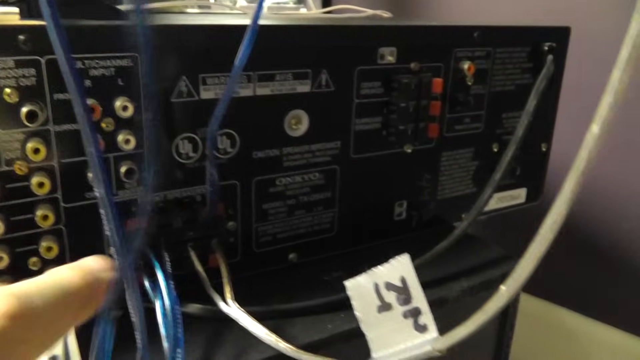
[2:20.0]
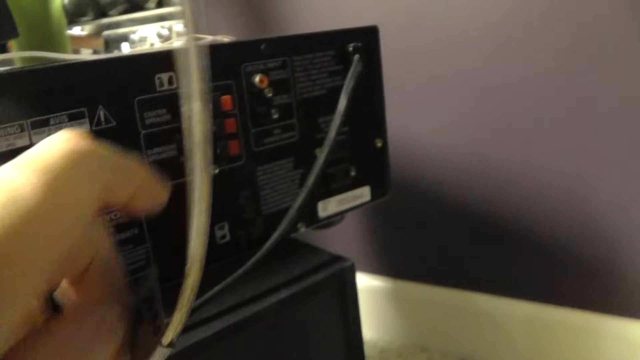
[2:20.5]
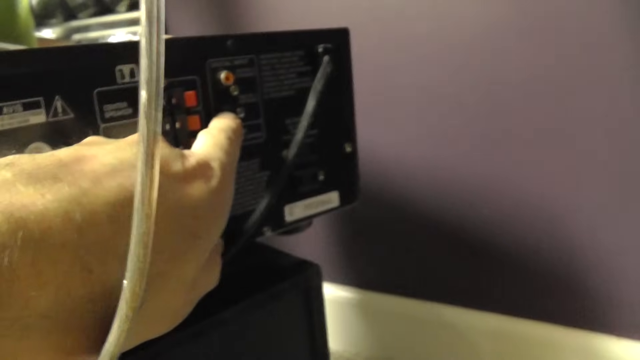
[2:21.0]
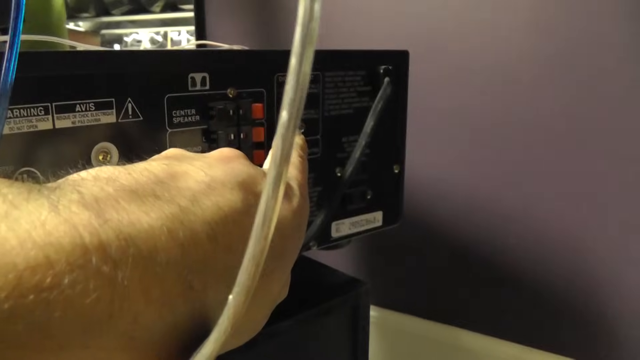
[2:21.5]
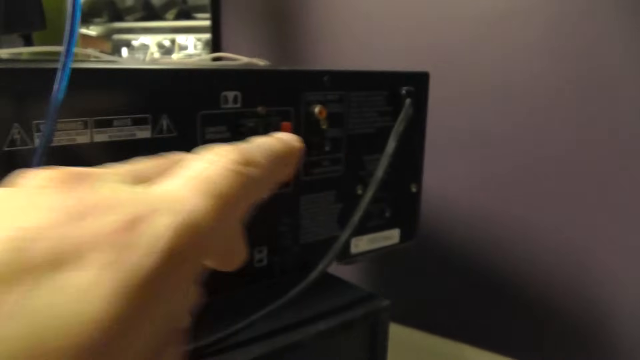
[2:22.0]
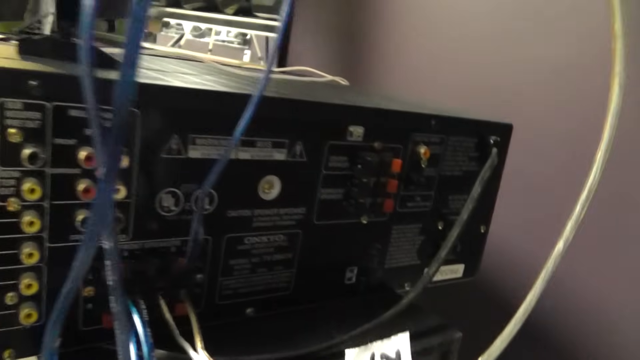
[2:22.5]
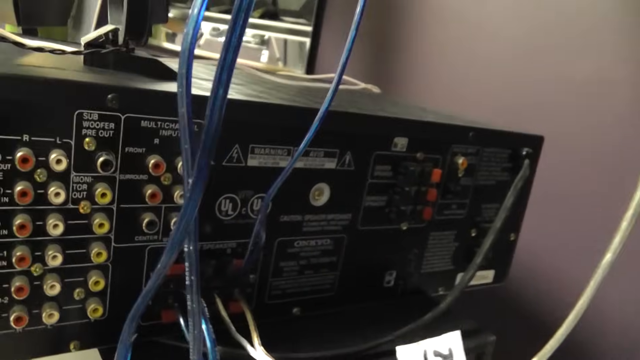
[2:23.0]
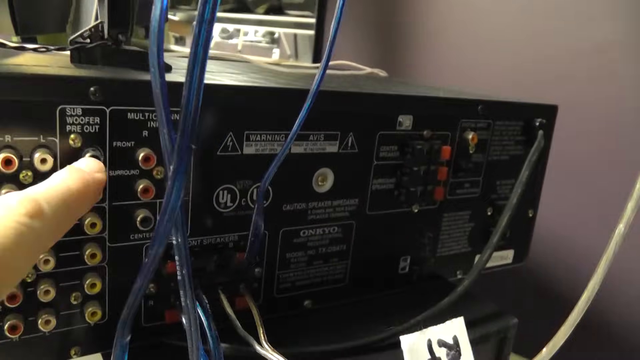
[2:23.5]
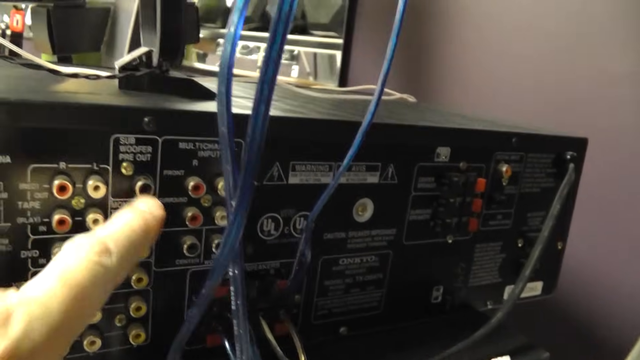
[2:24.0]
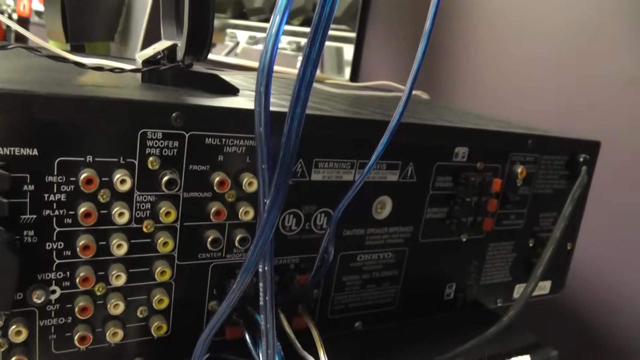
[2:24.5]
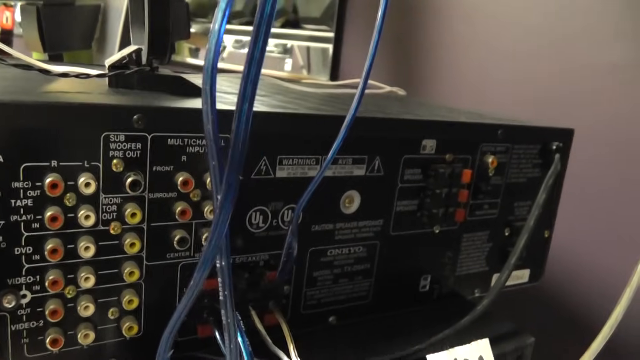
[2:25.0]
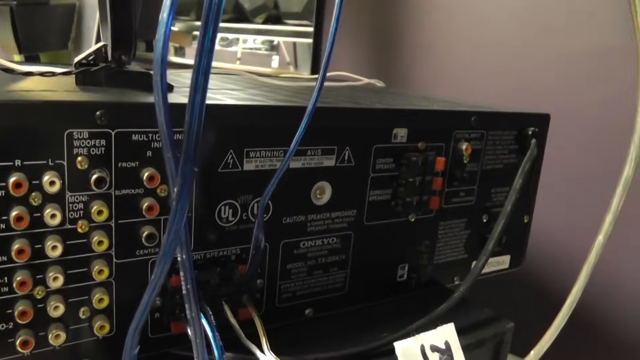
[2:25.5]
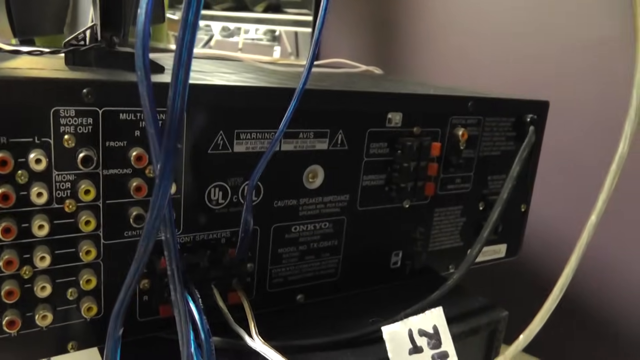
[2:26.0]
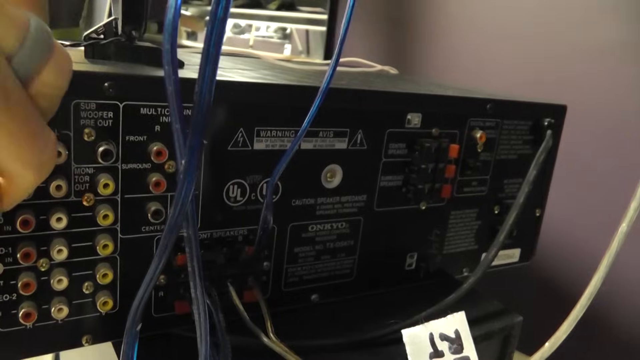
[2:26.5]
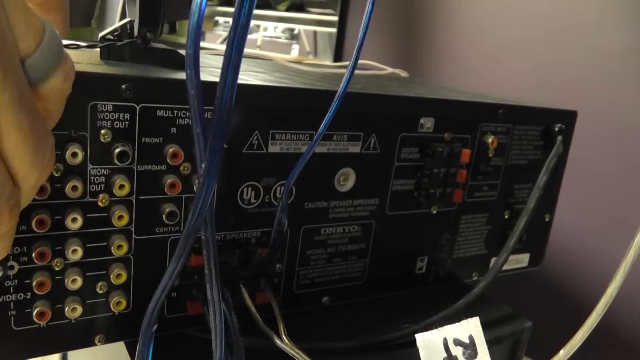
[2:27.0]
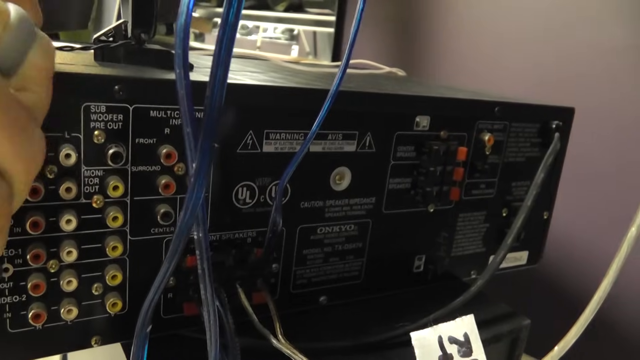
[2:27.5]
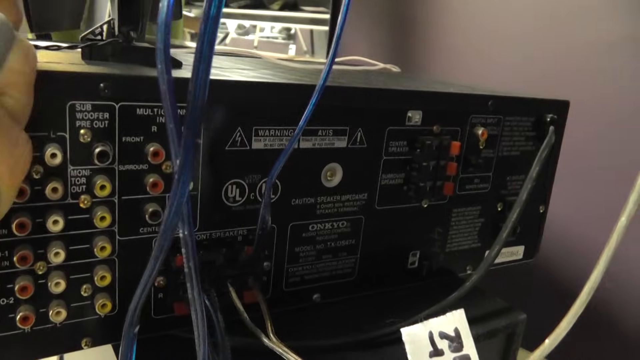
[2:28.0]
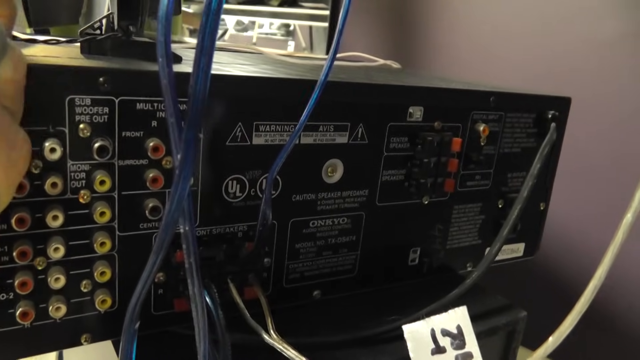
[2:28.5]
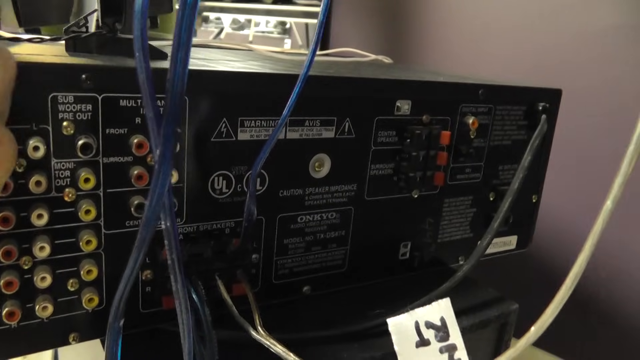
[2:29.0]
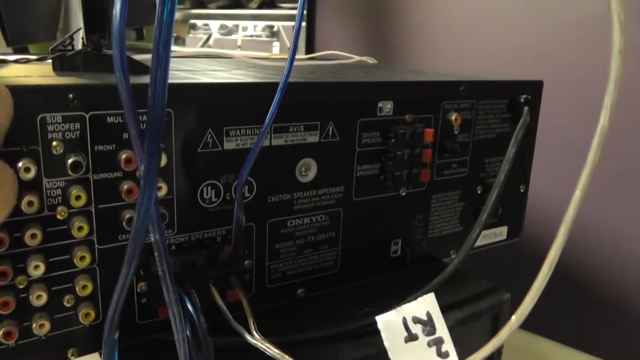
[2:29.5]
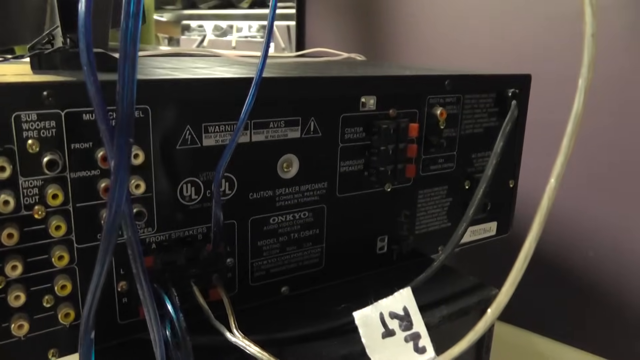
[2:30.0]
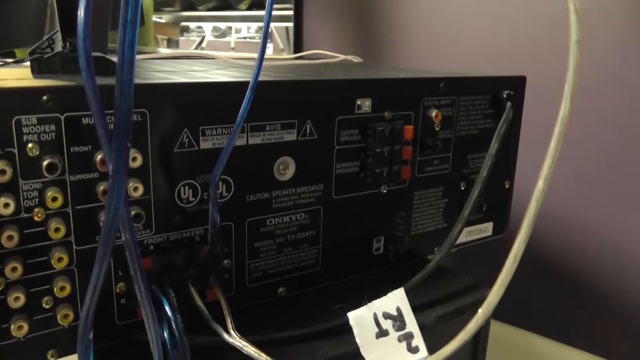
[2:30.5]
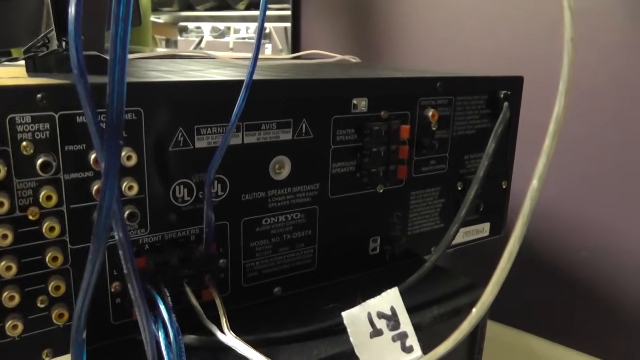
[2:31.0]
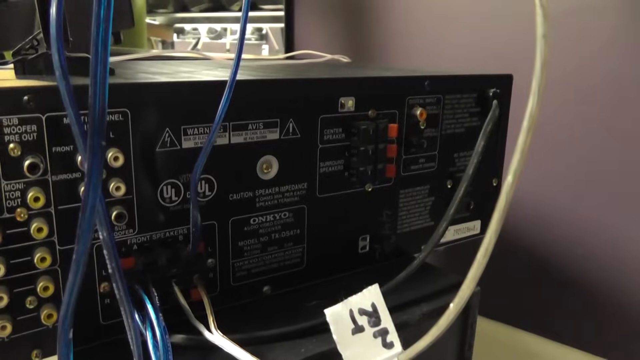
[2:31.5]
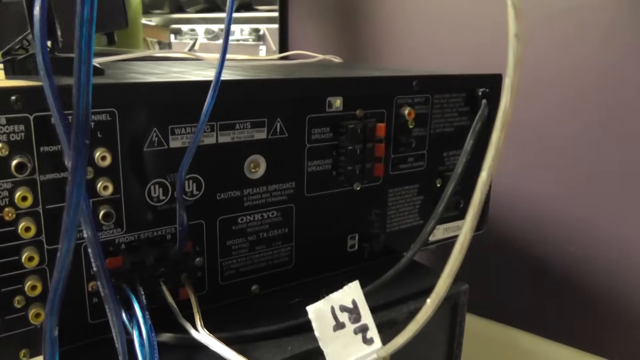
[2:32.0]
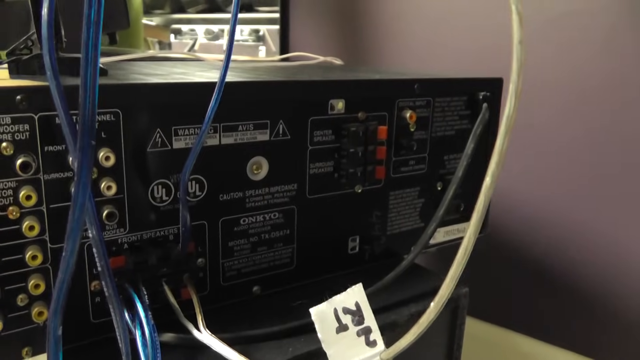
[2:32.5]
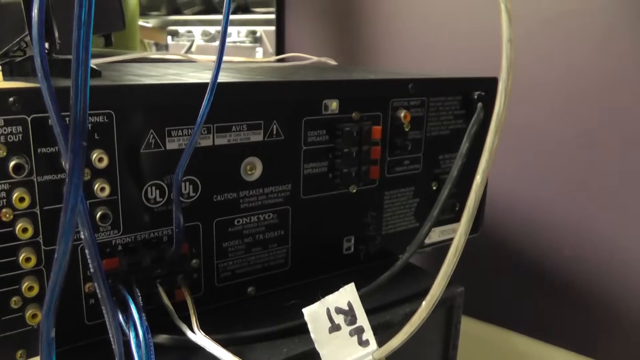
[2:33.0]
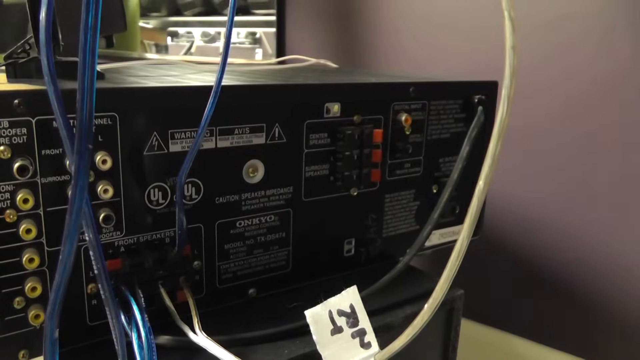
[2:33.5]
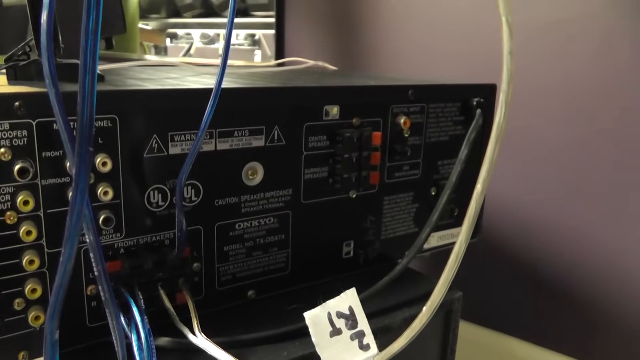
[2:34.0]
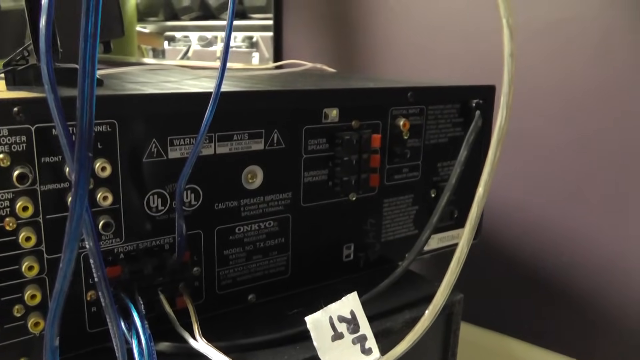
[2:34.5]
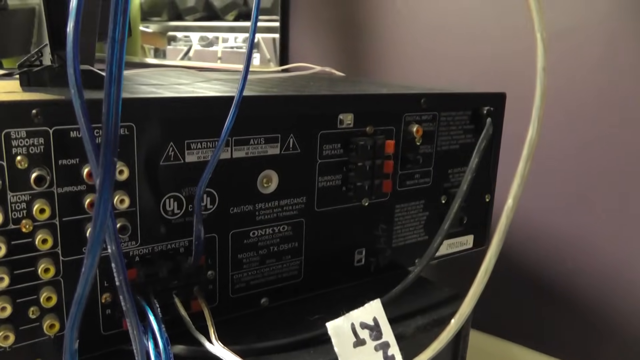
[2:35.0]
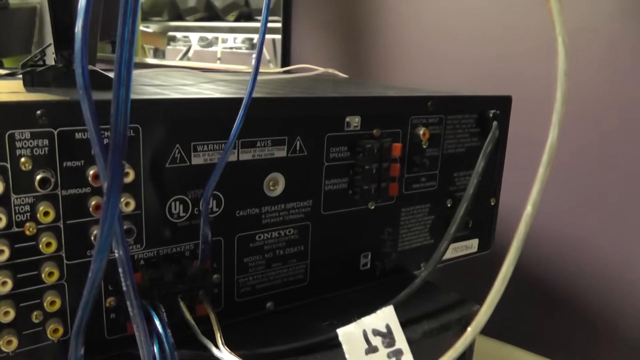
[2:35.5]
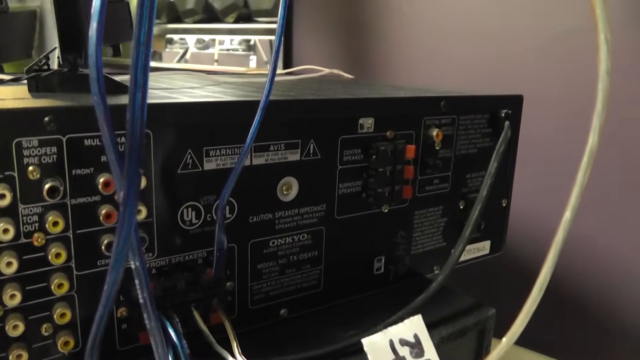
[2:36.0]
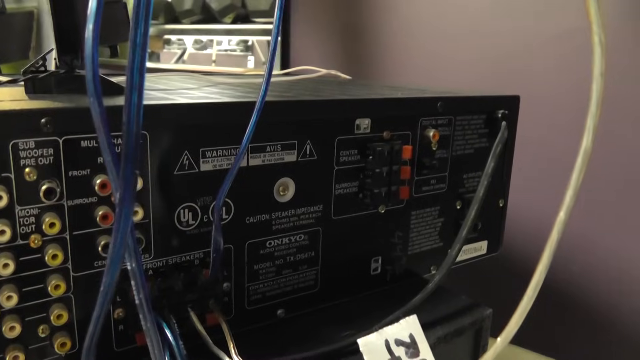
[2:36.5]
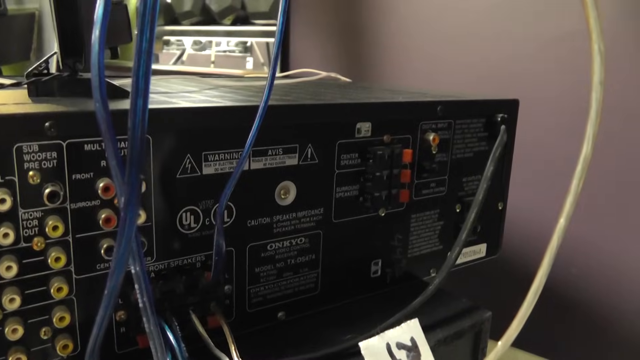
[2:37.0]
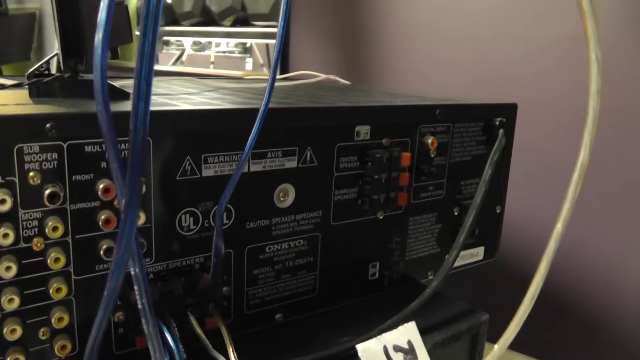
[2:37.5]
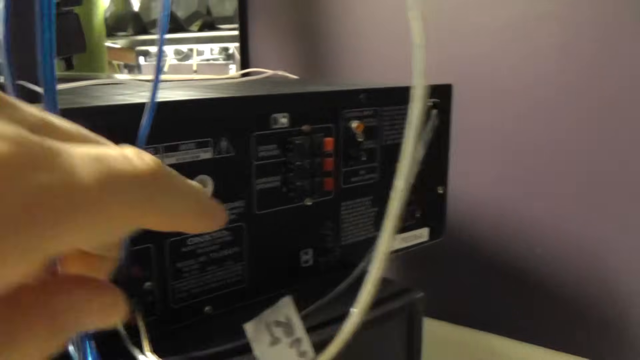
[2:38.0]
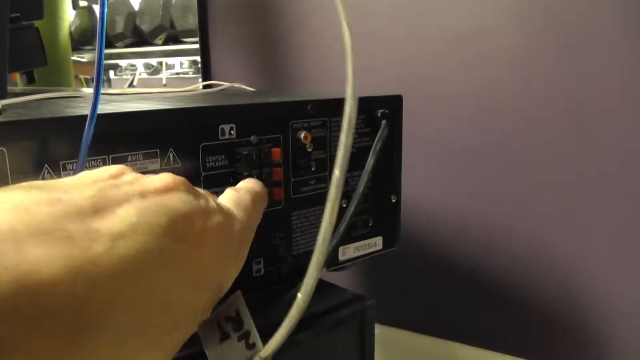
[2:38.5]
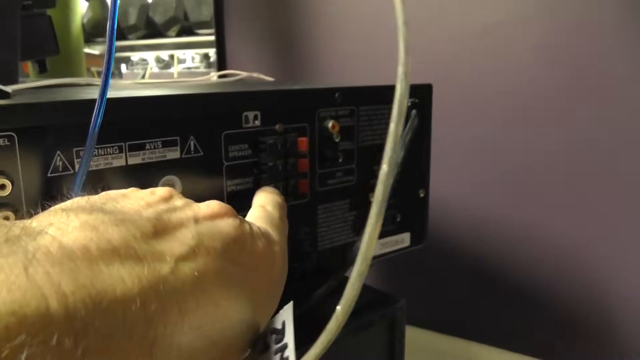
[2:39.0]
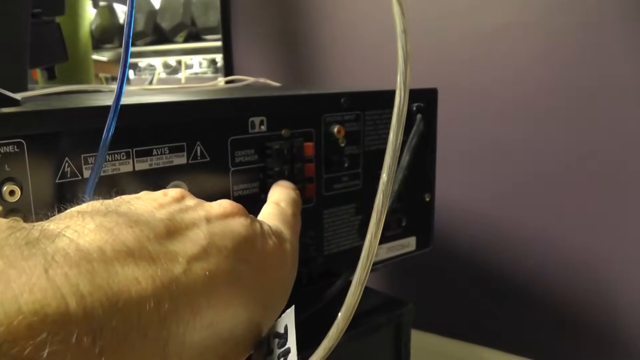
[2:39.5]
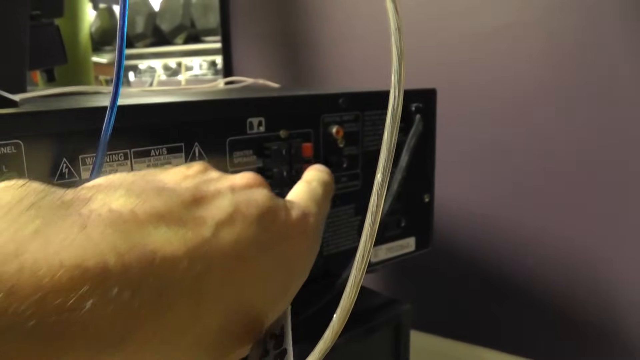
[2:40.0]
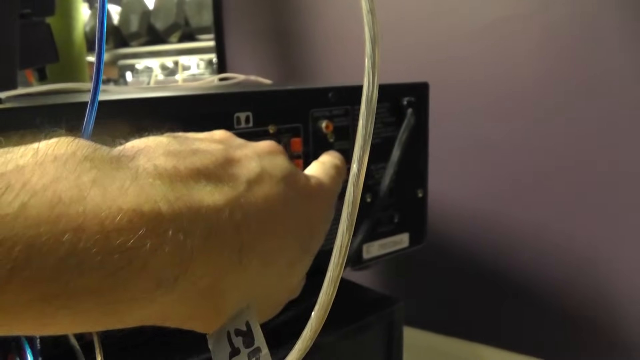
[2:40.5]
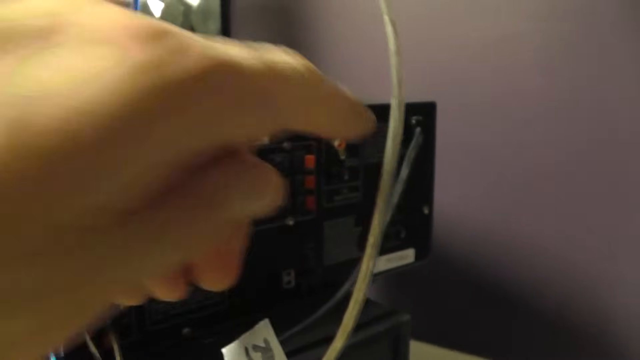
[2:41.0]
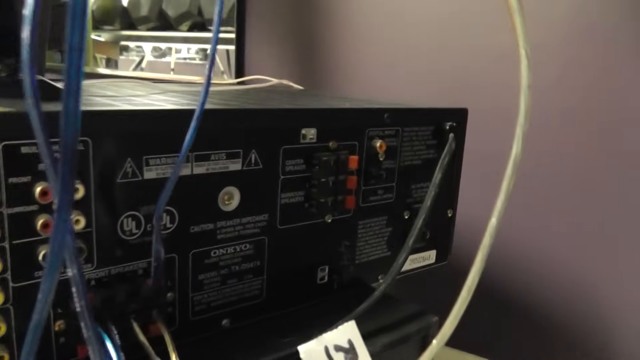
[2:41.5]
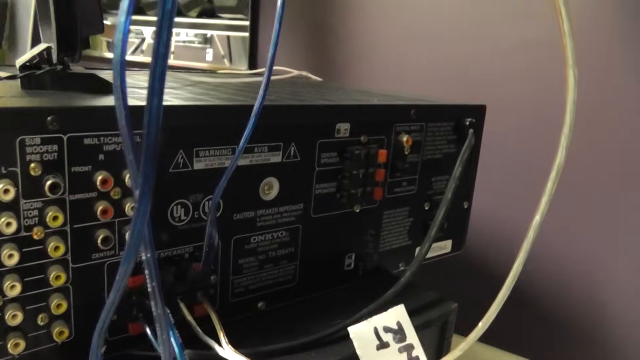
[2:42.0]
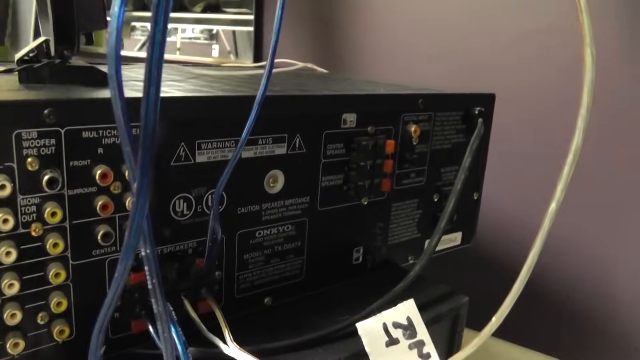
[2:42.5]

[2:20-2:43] The left hand comes in and moves cords away, pointing at multiple different items. While he moves the cords, four fingers are visible, with a ring on one finger; the shape of the hand shows it is a male. He points specifically to different items on the back. There are two ULs, and above them two triangles: the one on the left has a lightning bolt in it and the one on the right has an exclamation point. He points at all the different plug-ins and moves two of the little white cords over to the left for a better view. Labels show "video 1" and "video 2"; video 1 has two red, two white and two yellow inputs. He points specifically toward the red and white ones. The view then pans down to the wall, which has a large shadow on it.